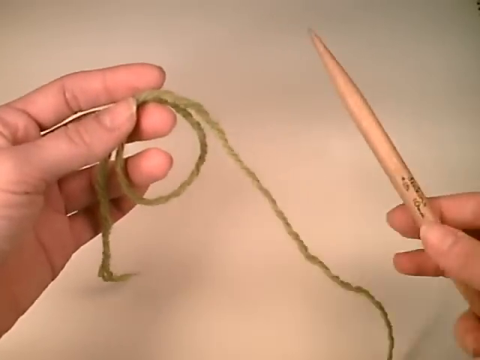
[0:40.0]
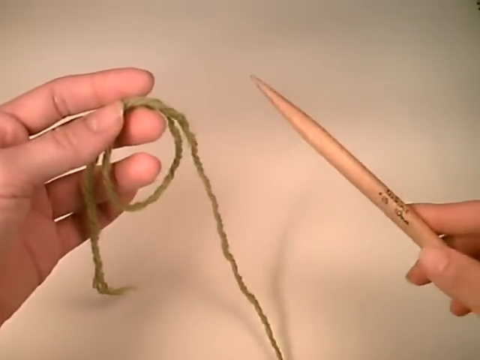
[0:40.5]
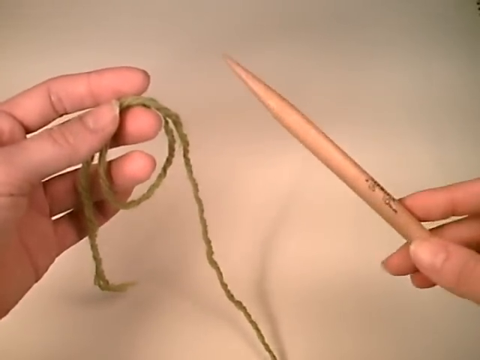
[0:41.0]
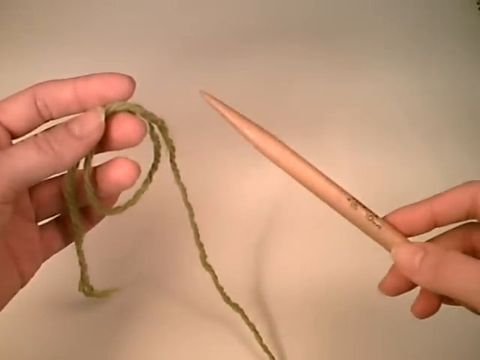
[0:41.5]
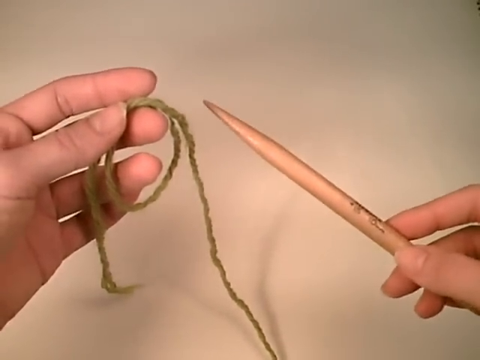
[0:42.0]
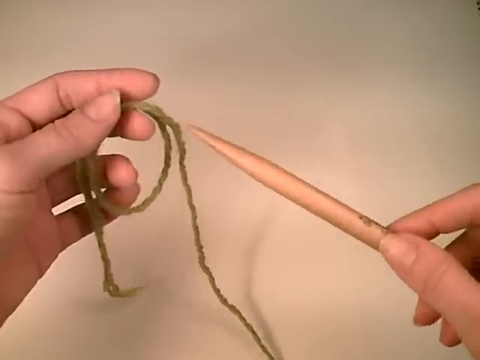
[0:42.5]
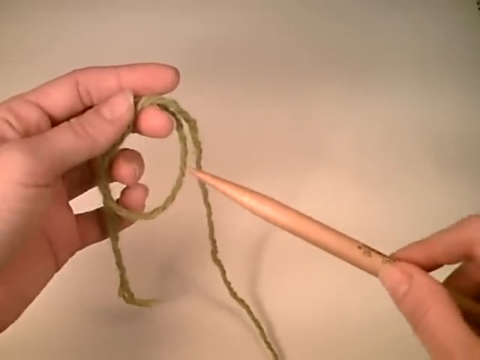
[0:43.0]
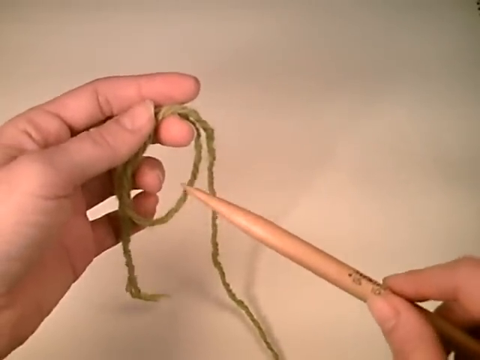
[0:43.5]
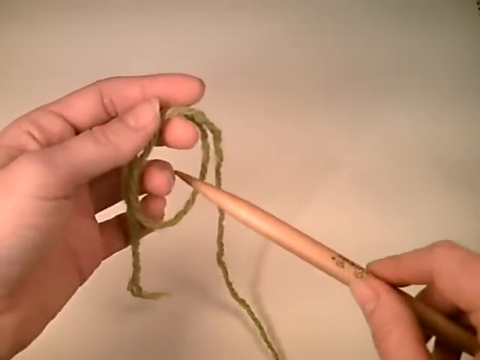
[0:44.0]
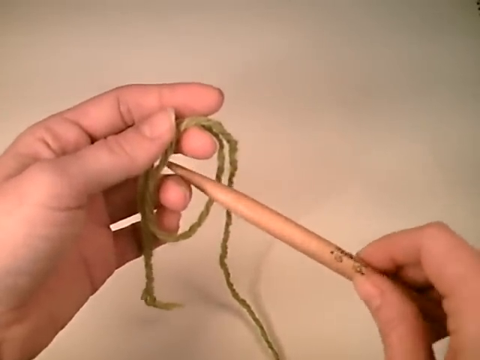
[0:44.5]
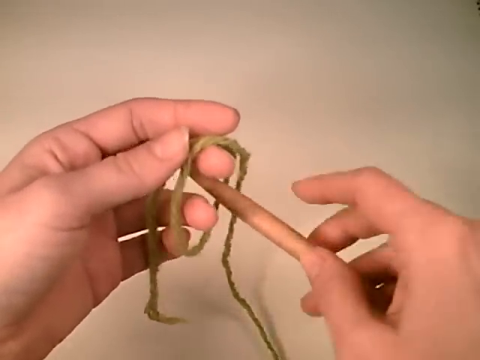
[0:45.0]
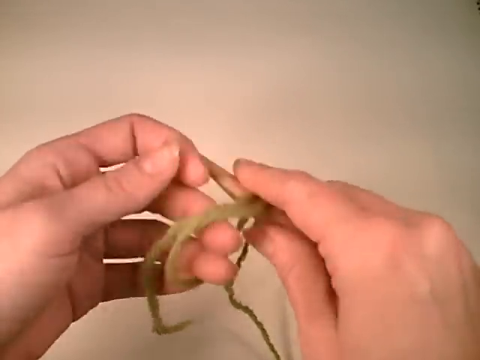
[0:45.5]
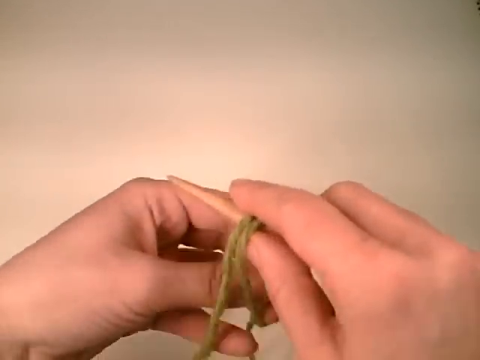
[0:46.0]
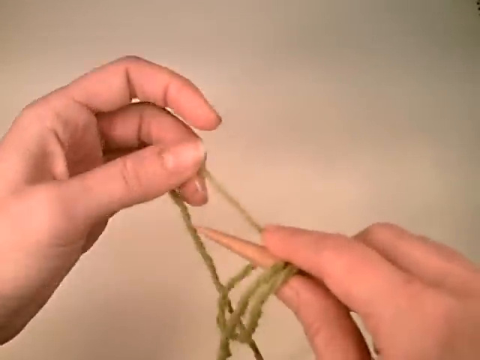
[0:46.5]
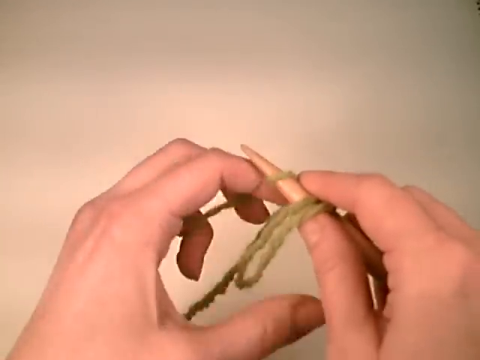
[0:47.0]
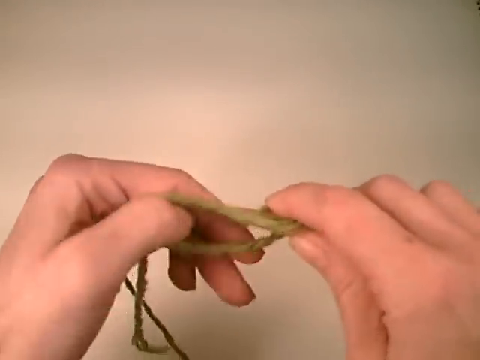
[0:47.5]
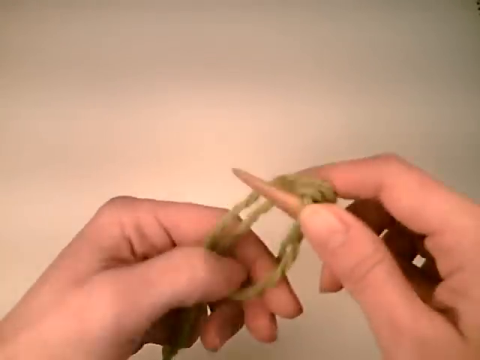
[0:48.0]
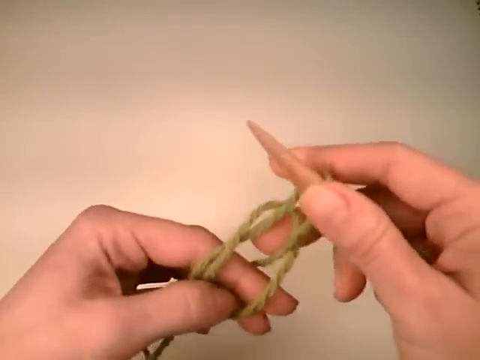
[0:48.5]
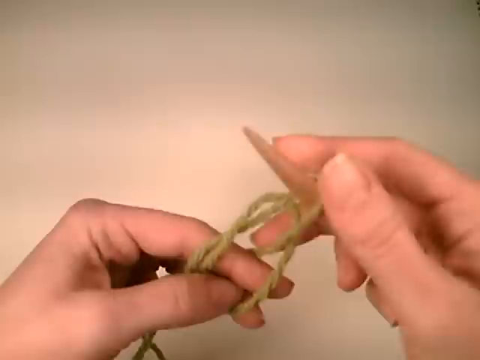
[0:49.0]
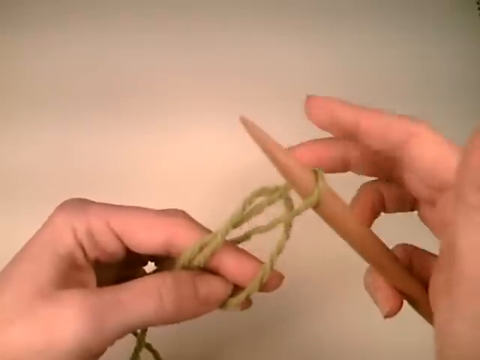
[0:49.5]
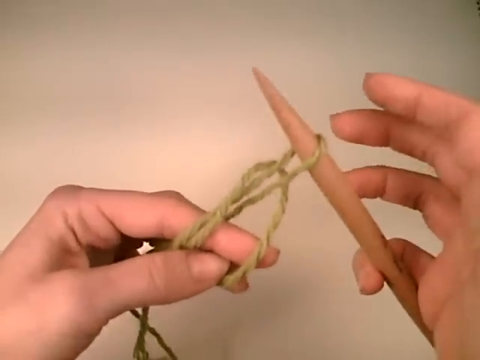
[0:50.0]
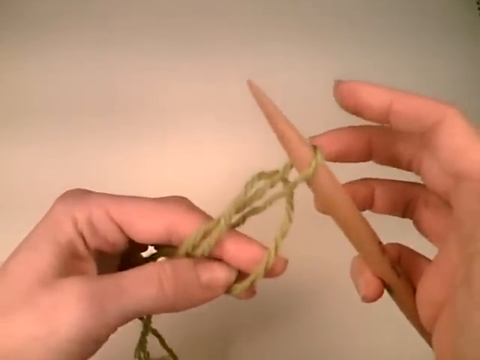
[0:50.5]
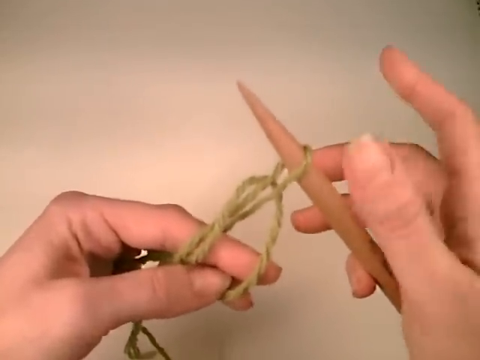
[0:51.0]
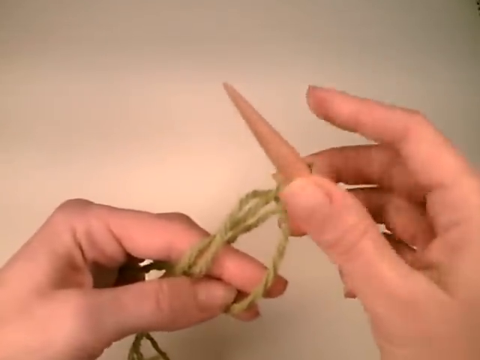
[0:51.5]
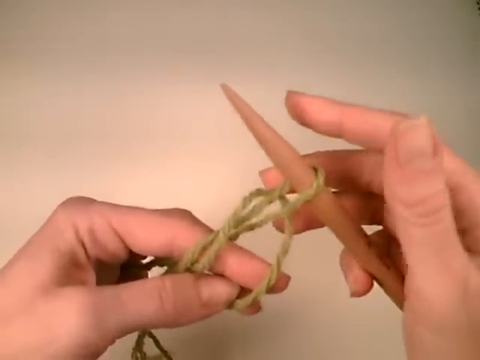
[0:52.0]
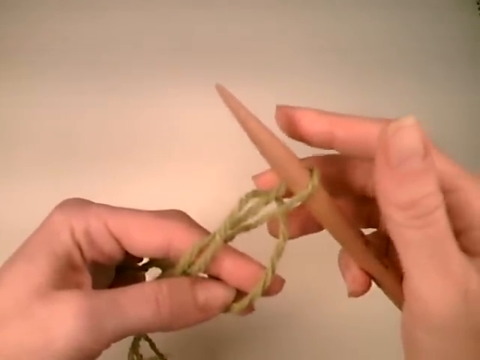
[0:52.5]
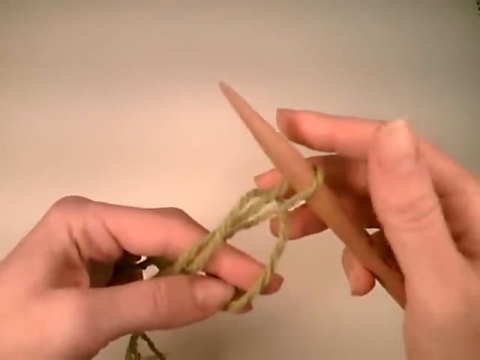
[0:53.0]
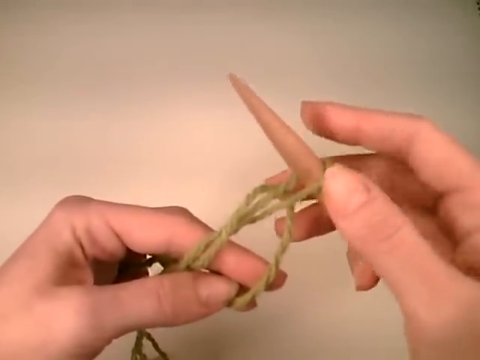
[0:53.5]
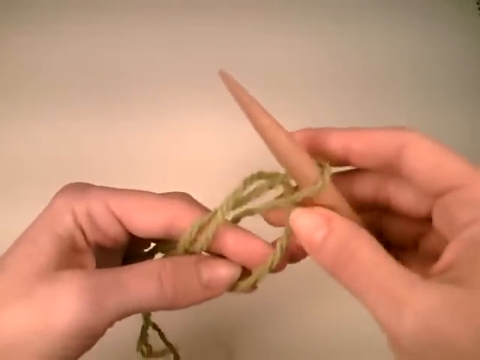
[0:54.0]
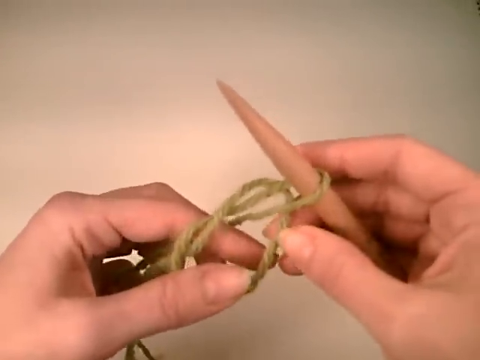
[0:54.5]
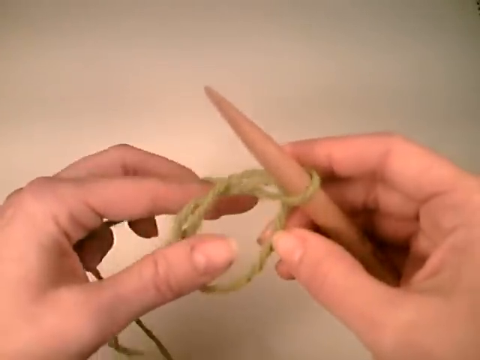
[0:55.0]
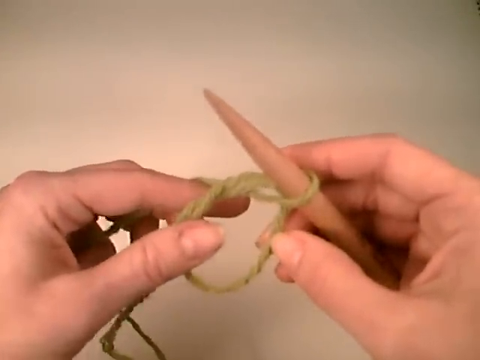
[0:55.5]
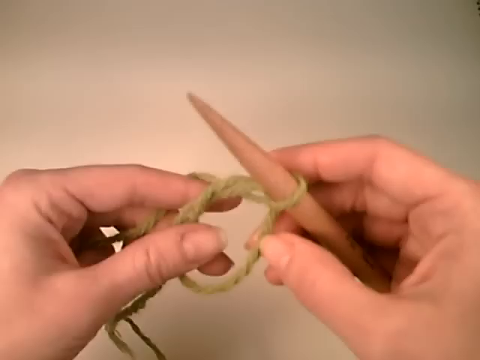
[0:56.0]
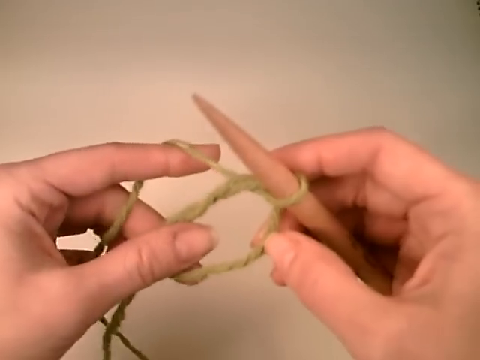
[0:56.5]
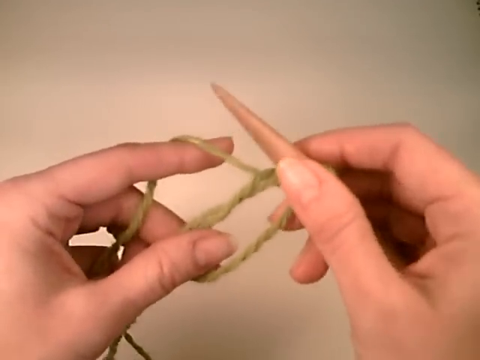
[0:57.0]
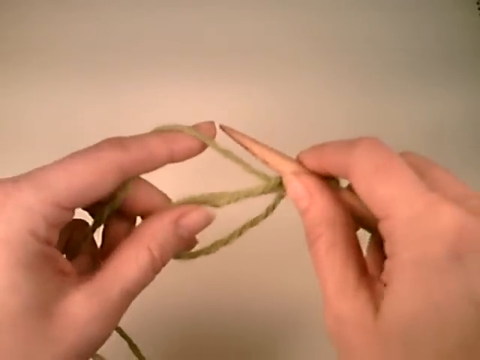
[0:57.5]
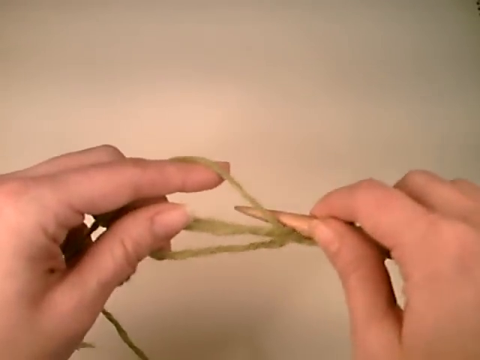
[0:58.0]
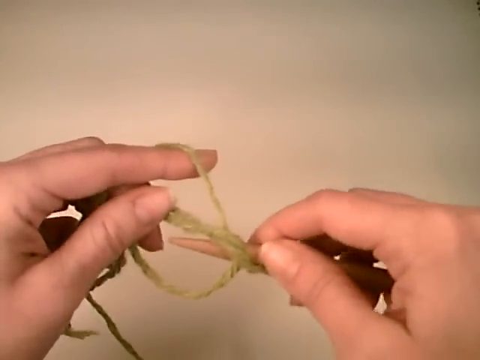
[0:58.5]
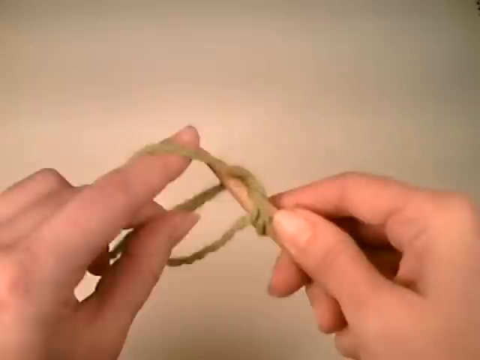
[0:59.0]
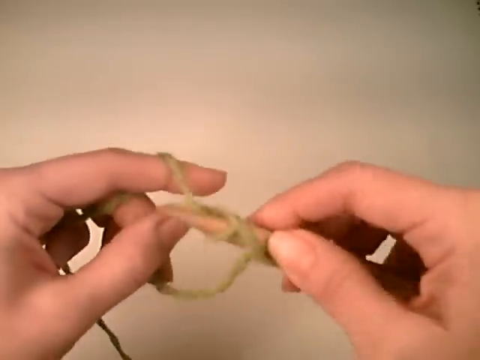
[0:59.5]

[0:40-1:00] A left hand holds a piece of thread, part of it in a circular knot, while a right hand holds a wooden knitting needle that appears to have some painting or branding on it. The hand puts the needle into the circular part of the thread and starts twisting it, in a way typical of knitting. From the hand movements and occasional pauses, the person appears to be explaining the process to viewers. The background is brownish, with shadows of the hands, thread and knitting needle reflected on it. The individual is possibly a white woman, based on the skin, and she seems to have a bit of nail on both thumbs. Nothing tangible has been created yet.